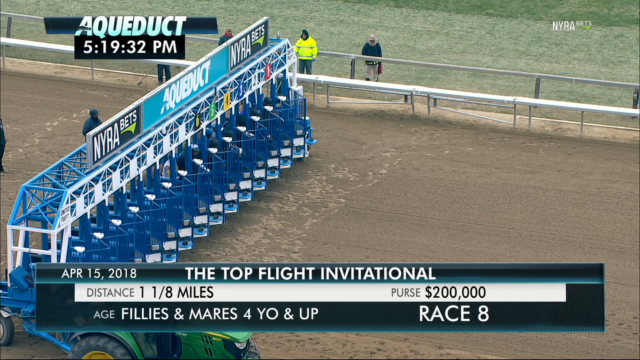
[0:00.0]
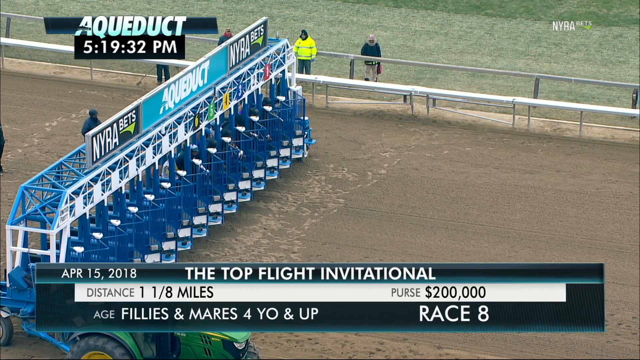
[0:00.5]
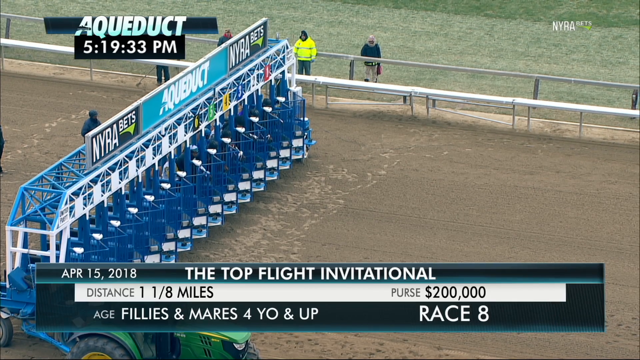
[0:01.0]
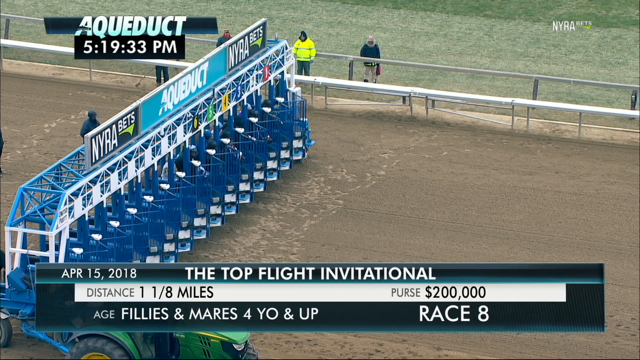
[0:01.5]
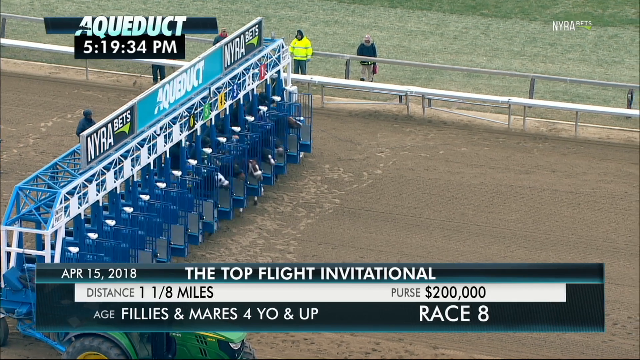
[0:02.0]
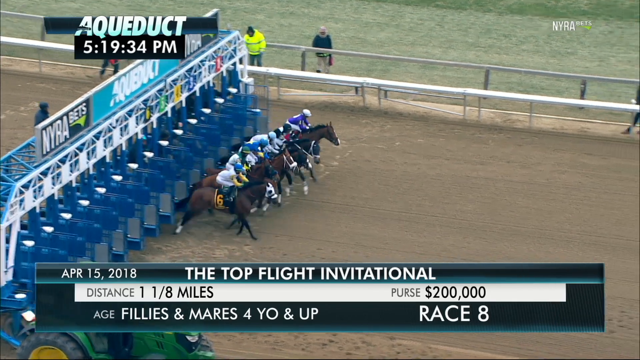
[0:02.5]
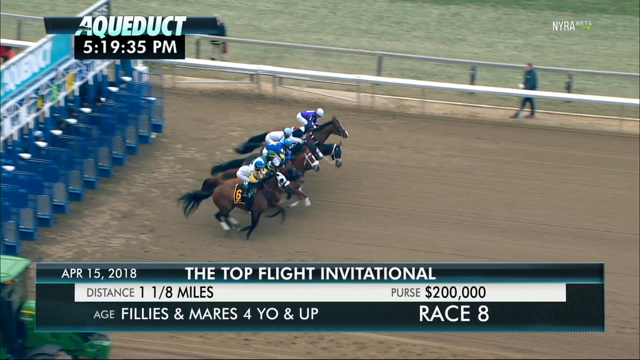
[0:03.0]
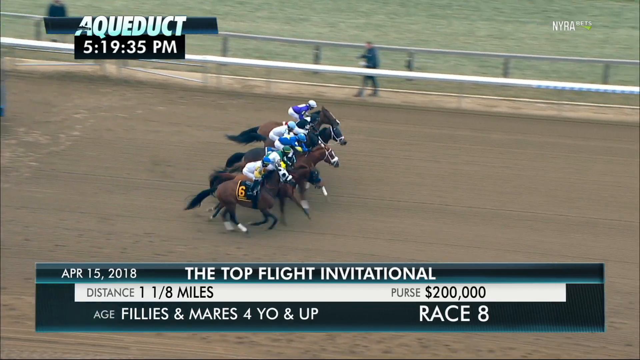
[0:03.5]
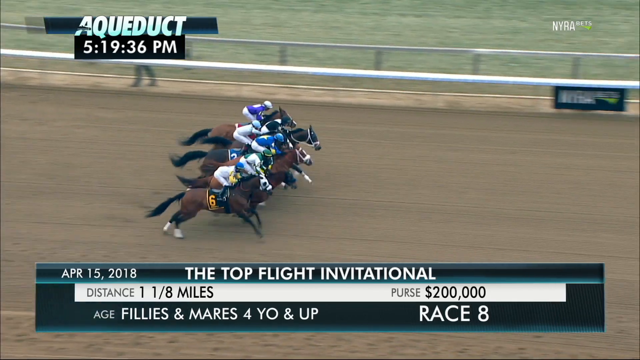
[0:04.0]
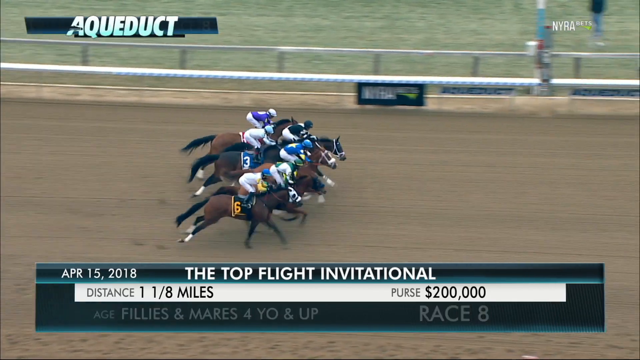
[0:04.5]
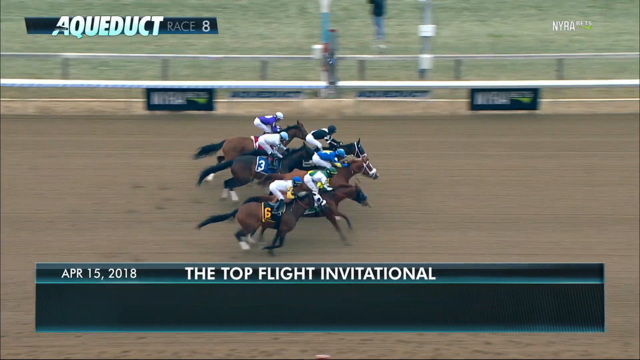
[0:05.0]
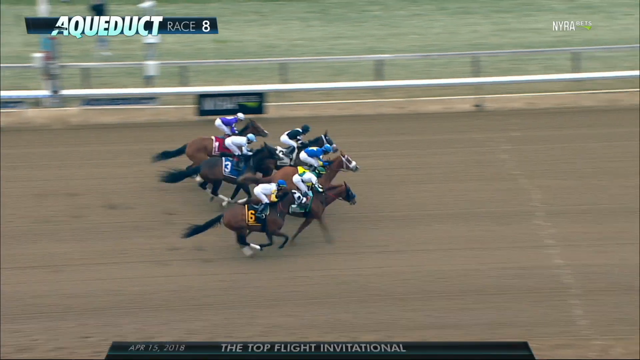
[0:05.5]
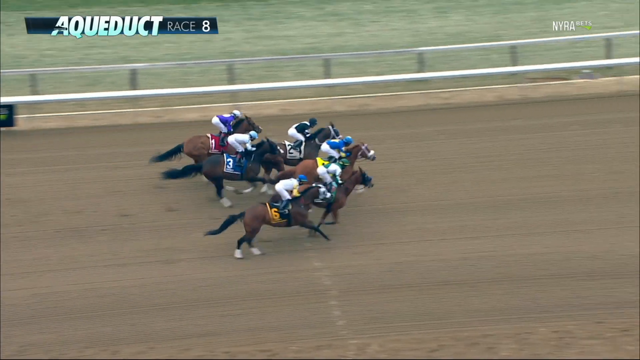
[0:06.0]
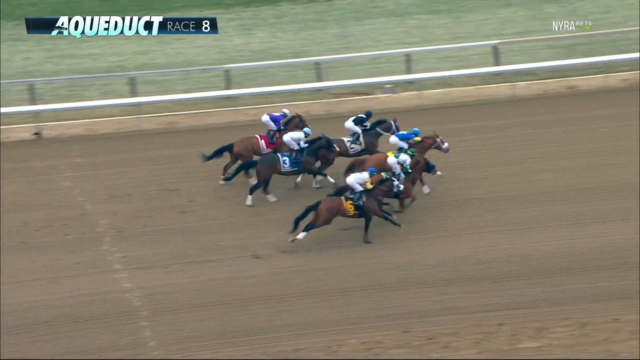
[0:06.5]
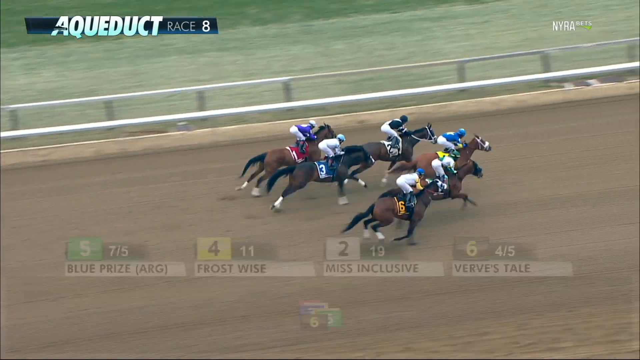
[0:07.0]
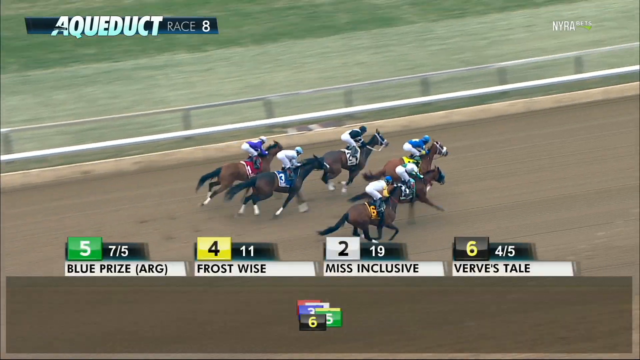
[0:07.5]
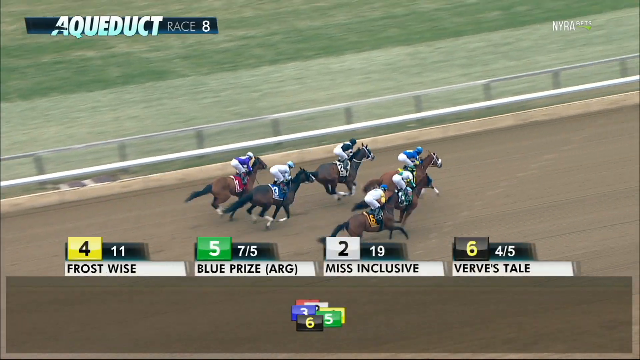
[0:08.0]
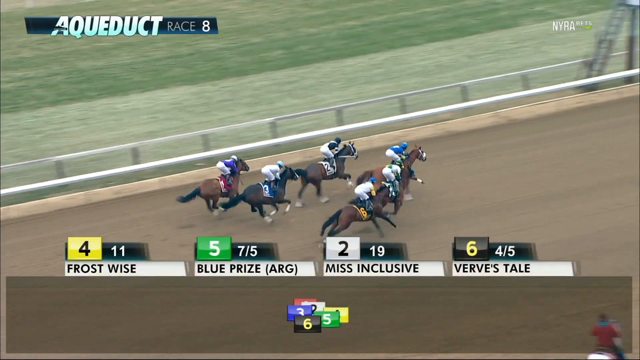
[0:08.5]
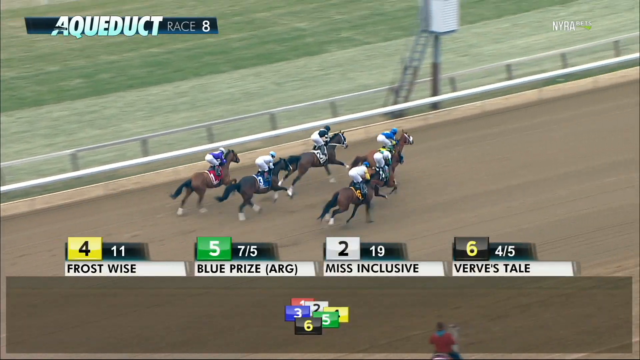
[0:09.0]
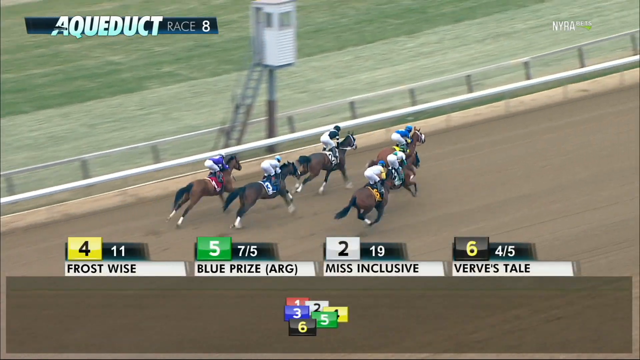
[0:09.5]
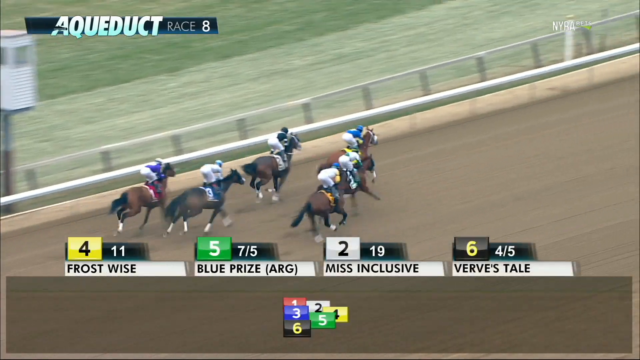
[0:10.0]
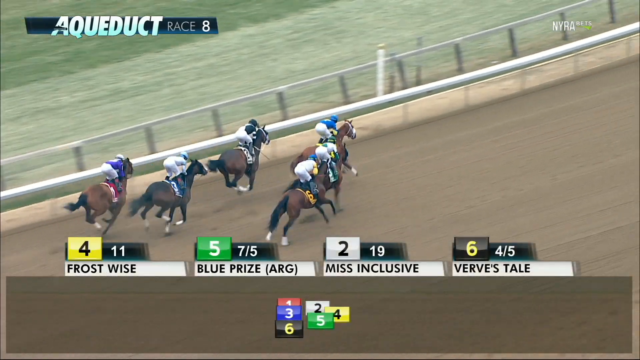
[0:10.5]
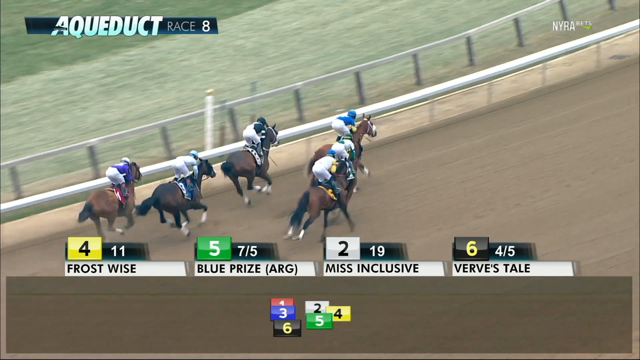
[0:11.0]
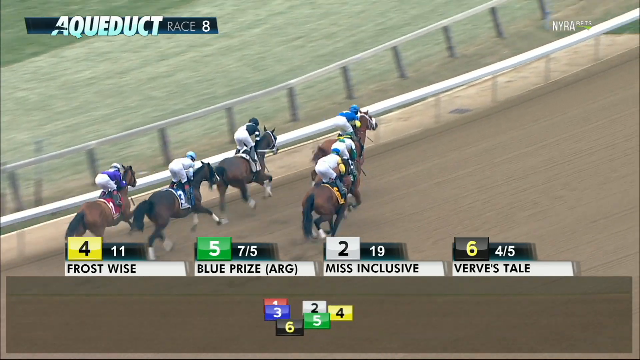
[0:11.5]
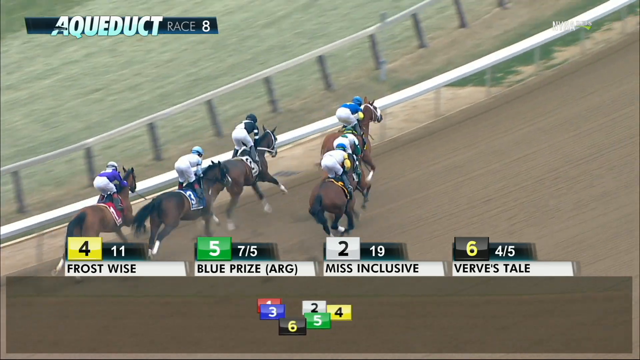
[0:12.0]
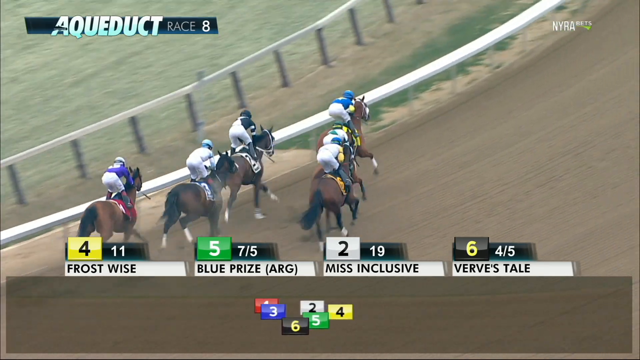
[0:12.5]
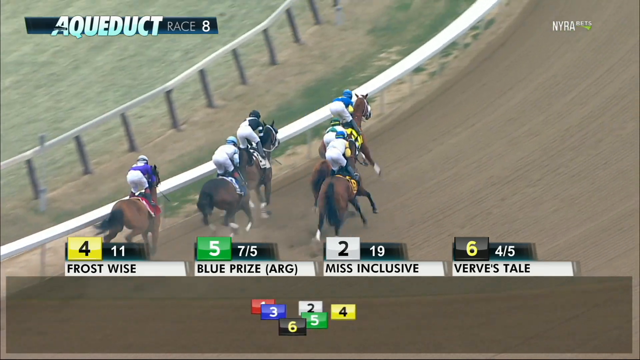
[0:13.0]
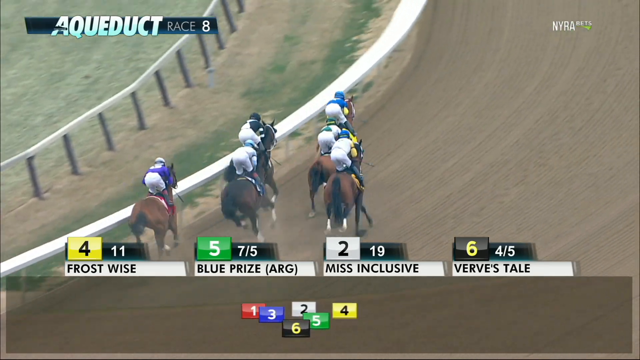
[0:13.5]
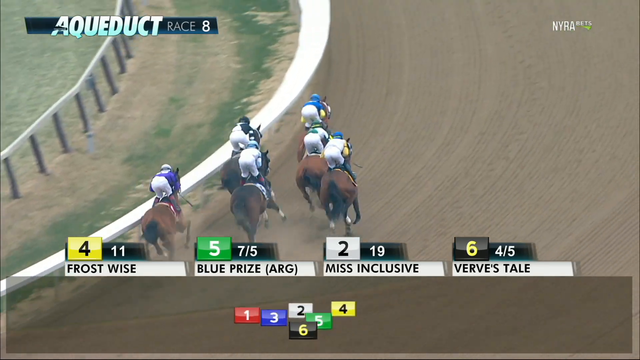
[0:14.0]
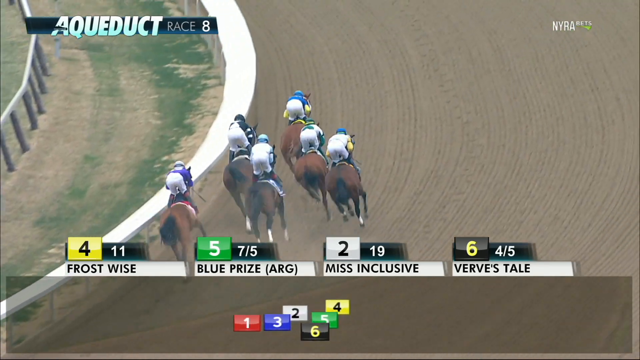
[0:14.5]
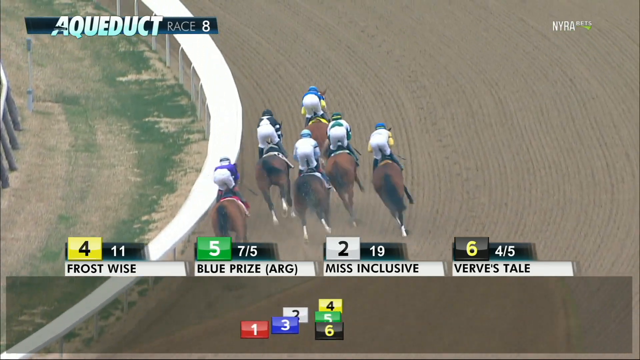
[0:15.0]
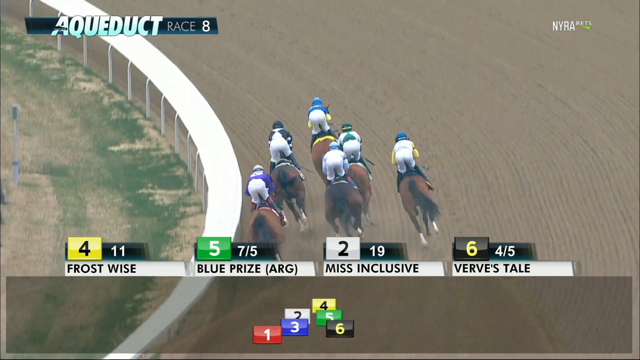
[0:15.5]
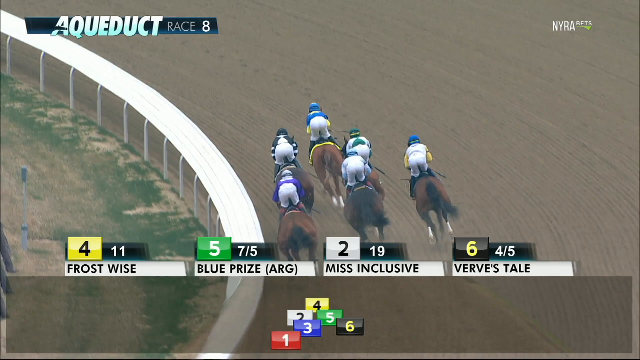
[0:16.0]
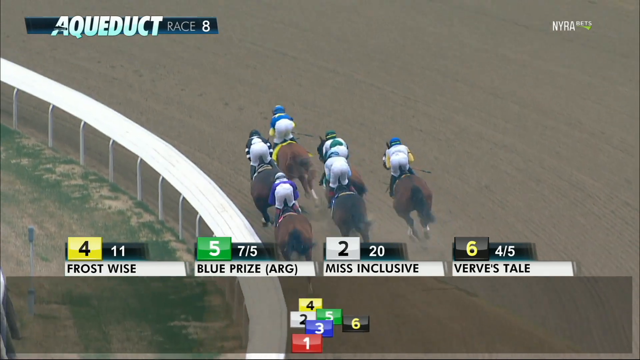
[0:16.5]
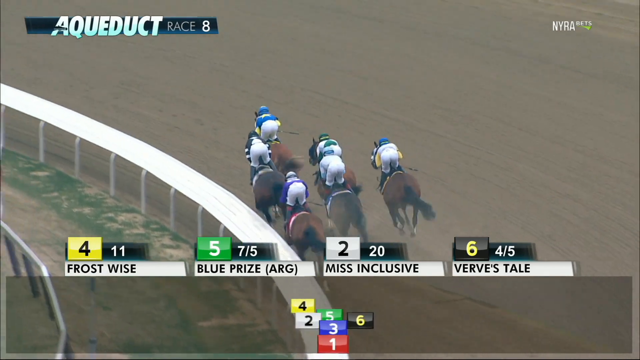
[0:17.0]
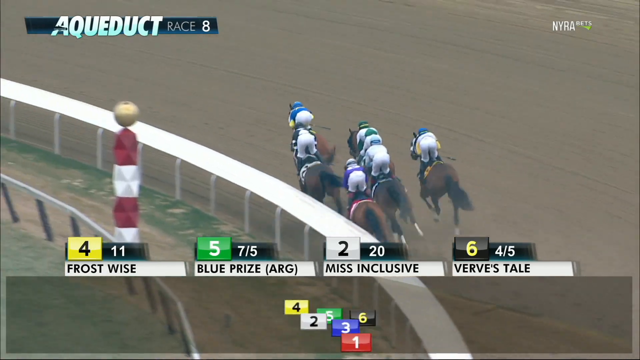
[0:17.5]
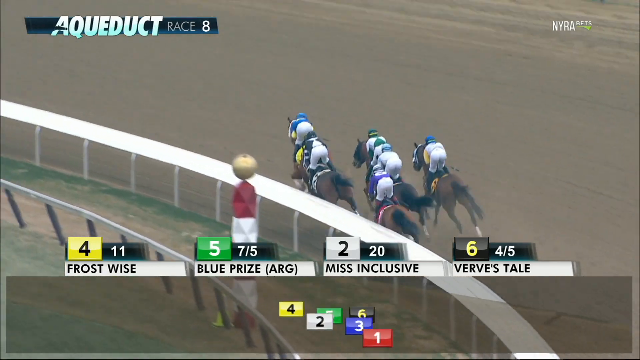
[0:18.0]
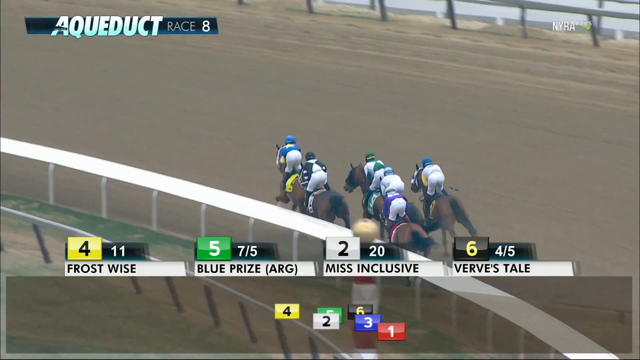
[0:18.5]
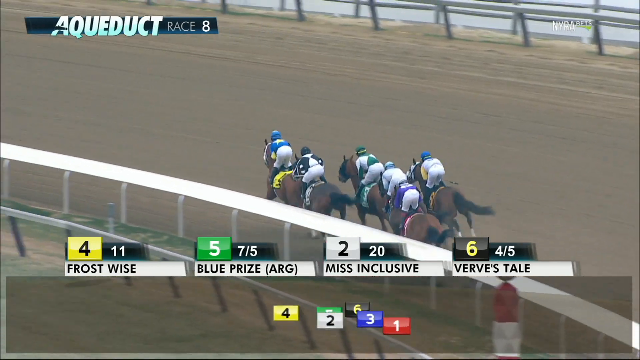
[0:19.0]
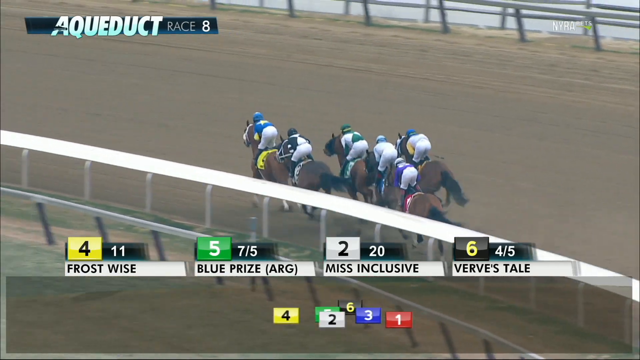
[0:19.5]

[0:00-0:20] The video appears to begin at a horse racetrack, with a title that looks like "Aqueduct." A time of 5:19:32 p.m. is shown at the top, along with the top flight invitational, a distance of one and one eighth mile, and a purse of $200,000. It looks like race number eight, and it appears to be a six-horse race: six horses with jockeys on them race around the dirt track after leaving the starting gate. The screen shows the running order. The number four horse, Frost Wise, is leading; the number five horse, Blue Prize, which looks like it is from Argentina, is second; Miss Inclusive, number two on the side of the saddle, is third; and Versus Tail, number six, is fourth. The horses race on in a full sprint, moving very fast, and the places do not change.